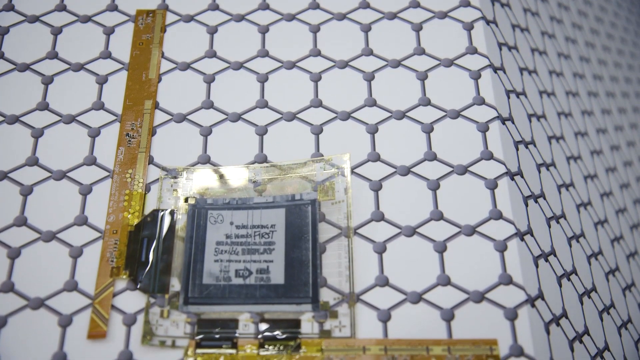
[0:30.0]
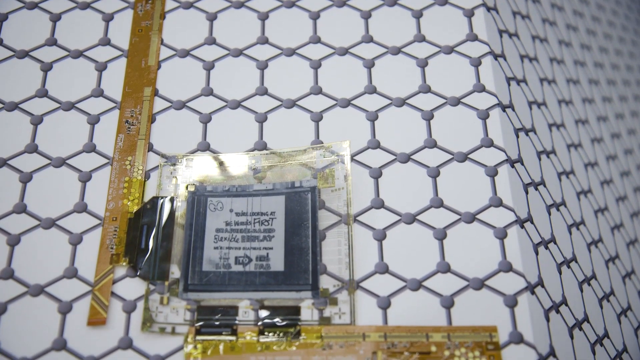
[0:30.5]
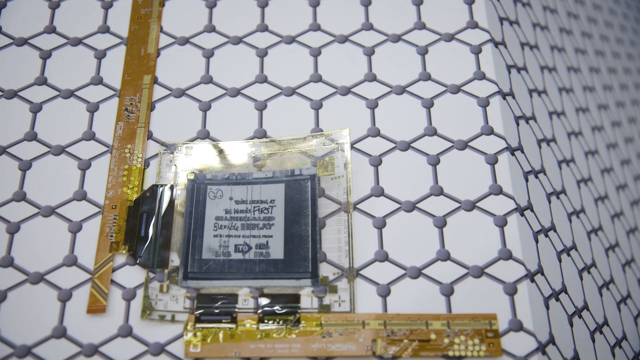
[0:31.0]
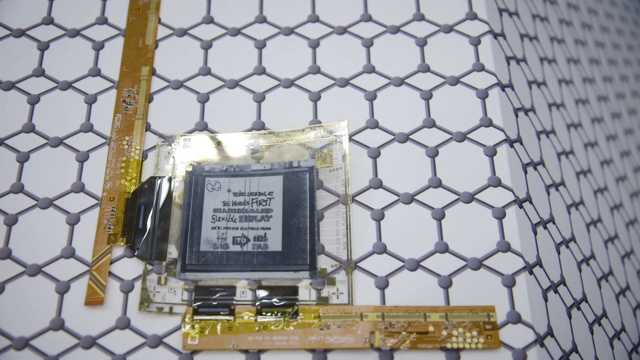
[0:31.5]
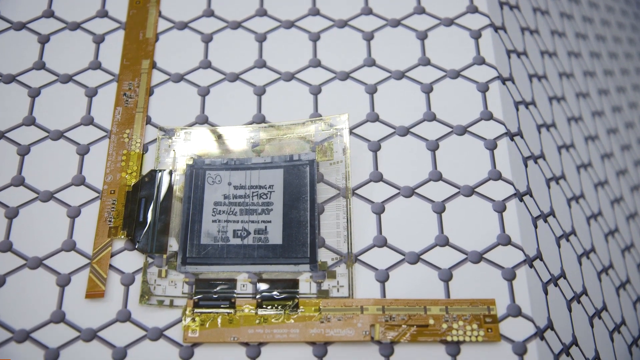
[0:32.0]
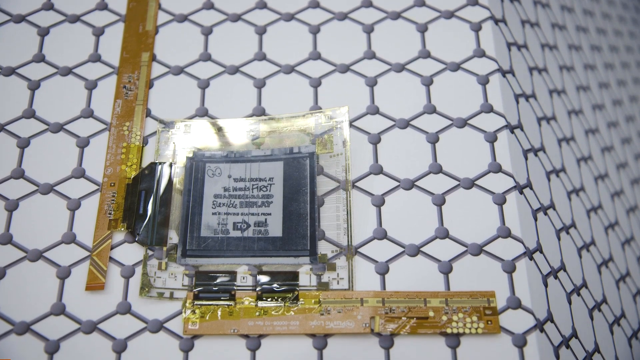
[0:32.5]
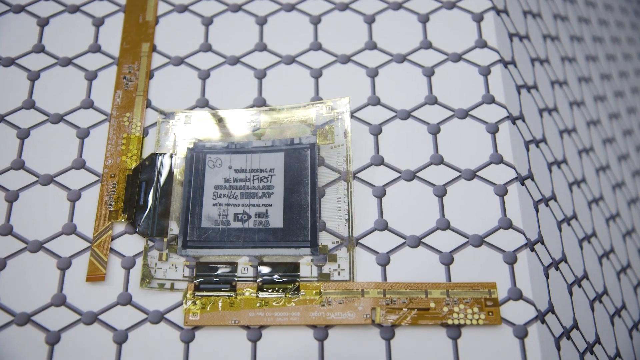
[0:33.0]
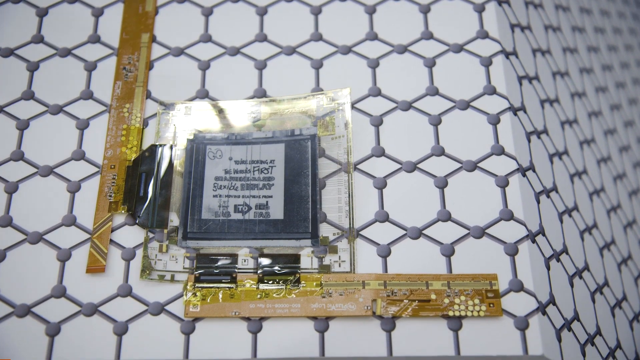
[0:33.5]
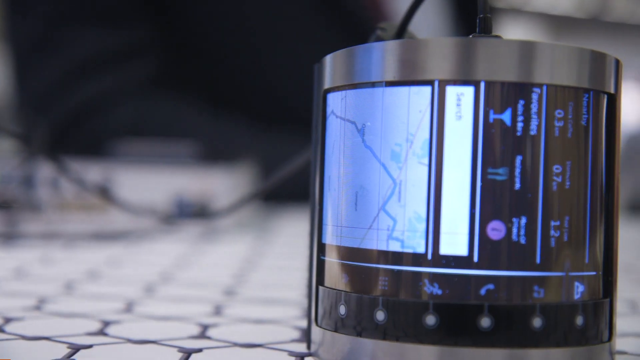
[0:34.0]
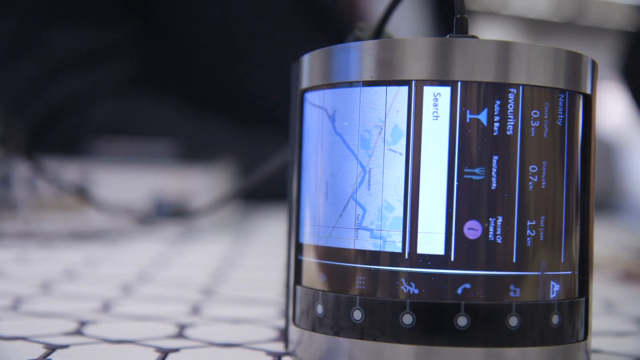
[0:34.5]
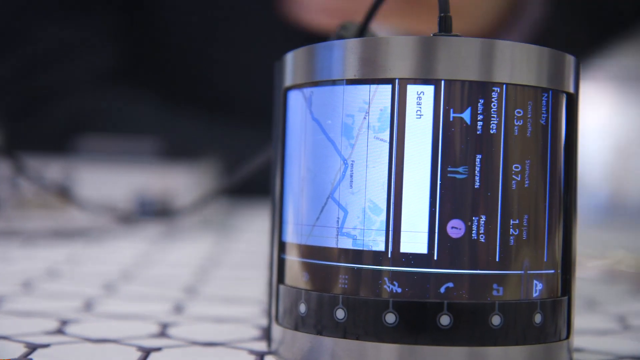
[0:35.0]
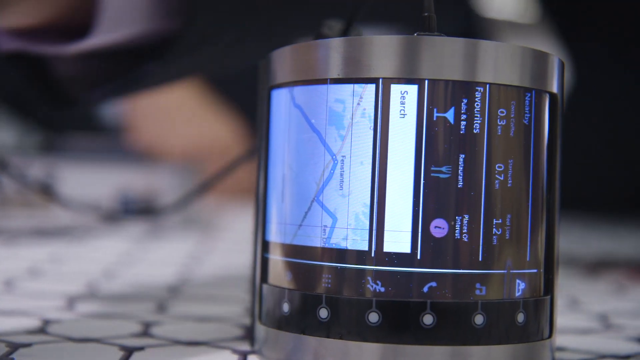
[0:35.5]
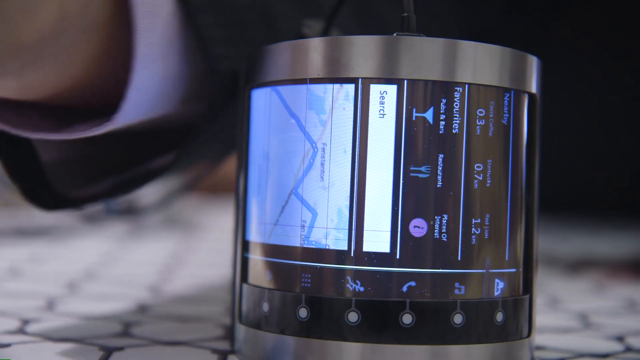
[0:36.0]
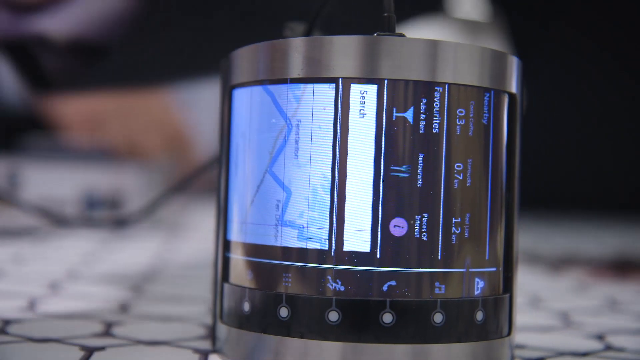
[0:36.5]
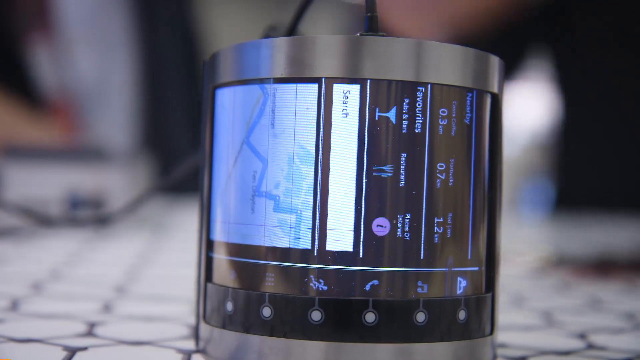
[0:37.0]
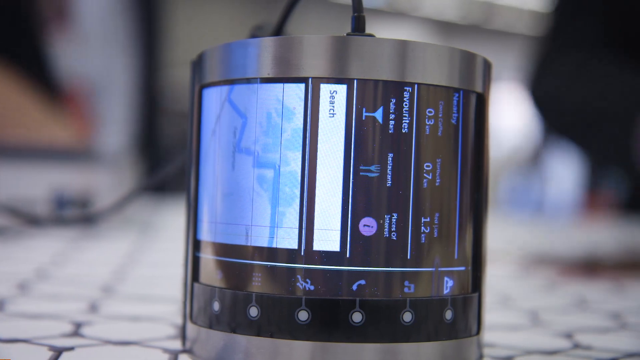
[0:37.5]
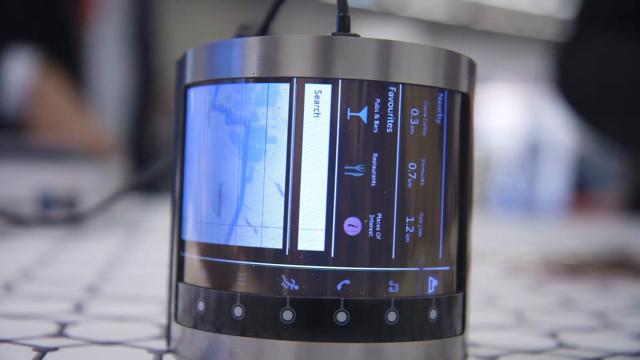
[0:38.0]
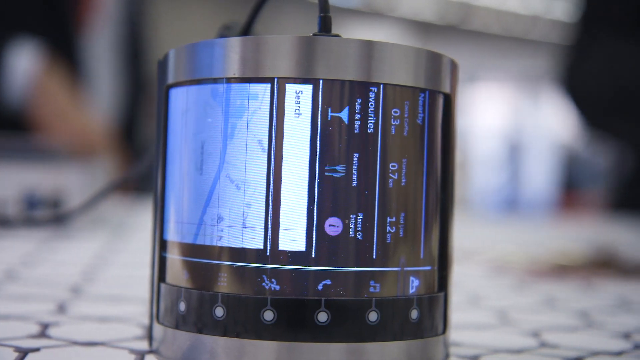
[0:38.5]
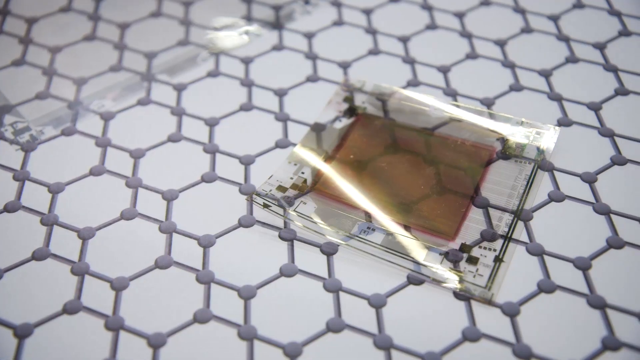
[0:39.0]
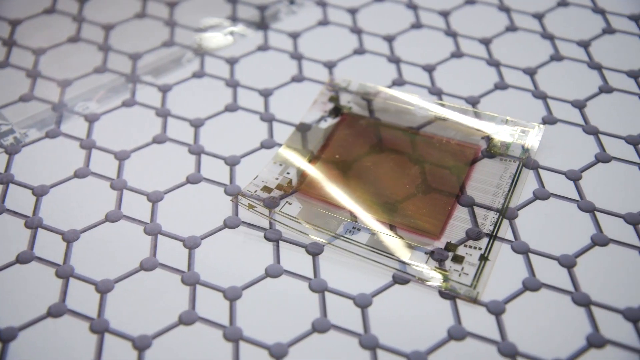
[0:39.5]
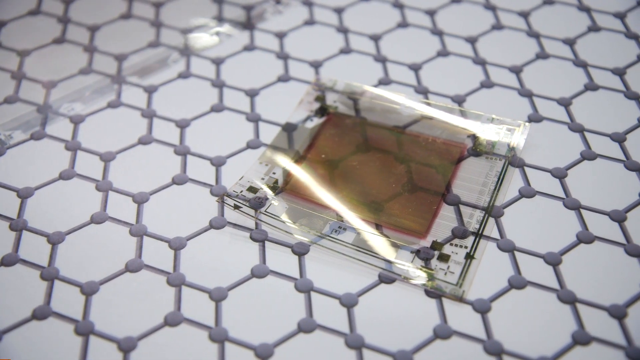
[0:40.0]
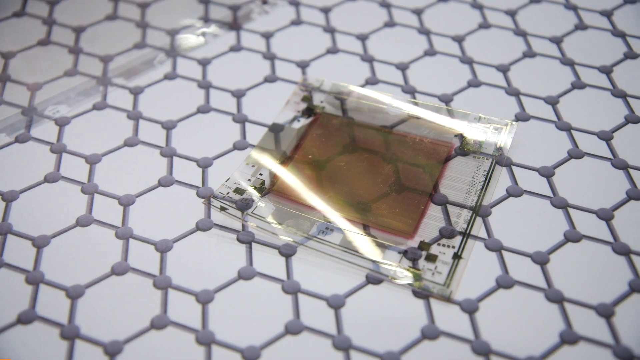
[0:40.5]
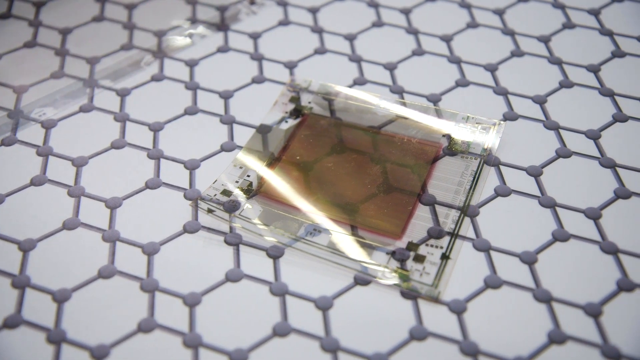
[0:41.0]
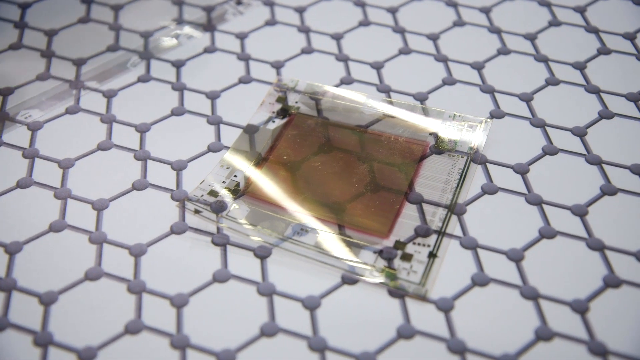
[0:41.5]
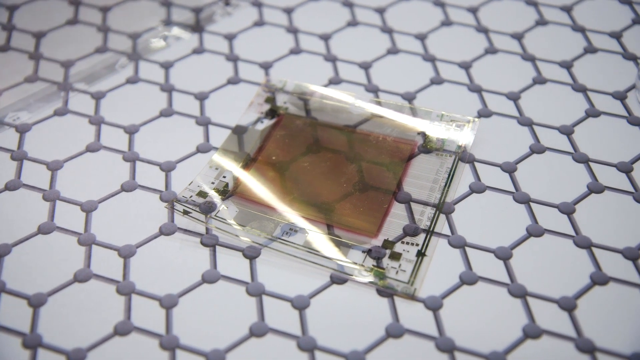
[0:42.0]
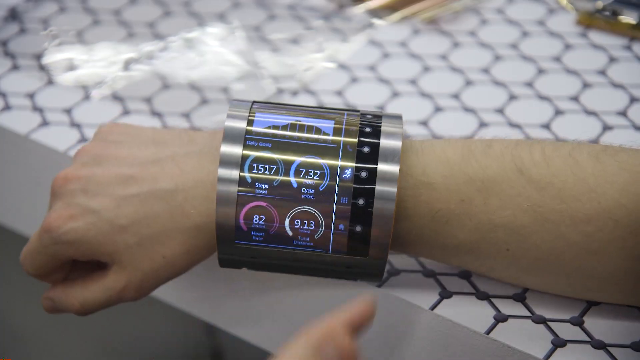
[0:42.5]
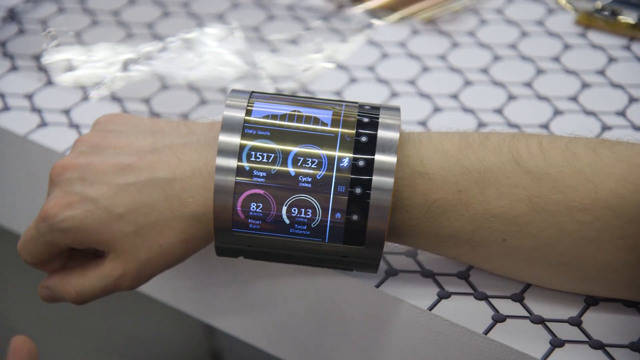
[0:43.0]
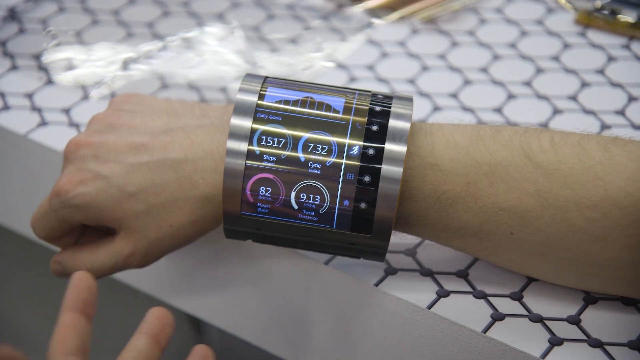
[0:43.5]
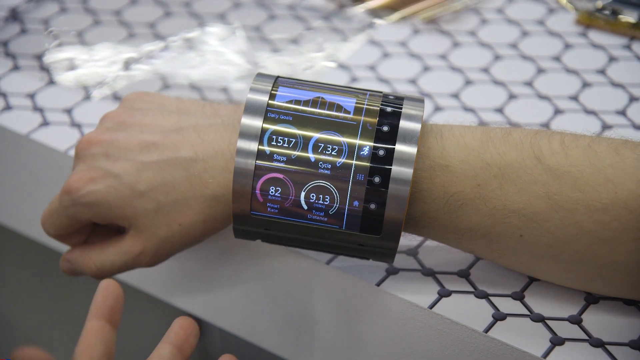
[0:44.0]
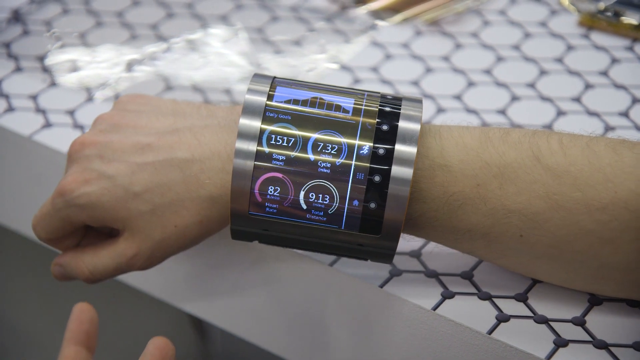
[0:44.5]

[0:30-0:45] A wristband with all kinds of technical features on it is shown. Next, a computer chip in a plastic bag lies on the table, showing how small the technology is. The wristband is laying on a white table with black hexagon shapes connecting and intertwining with one another. Then the man's arm rests on the table, and around his wrist is the wristband, showing graphs and everything it is able to do.